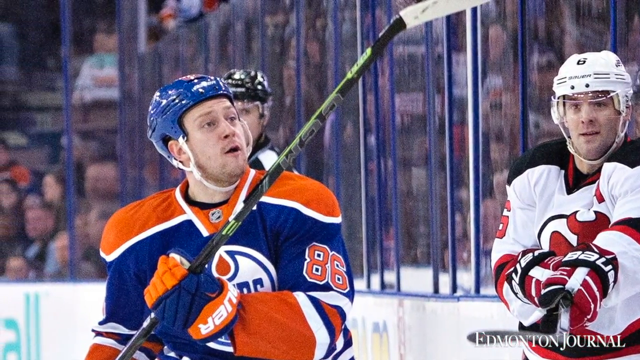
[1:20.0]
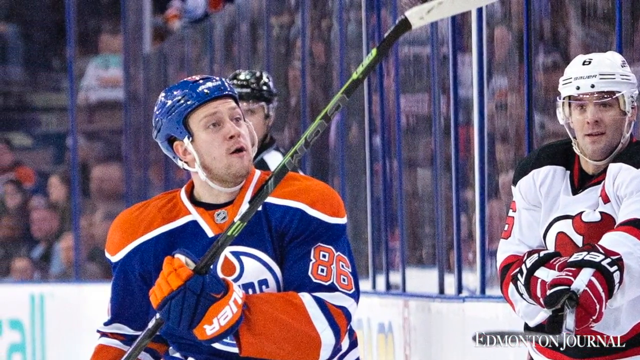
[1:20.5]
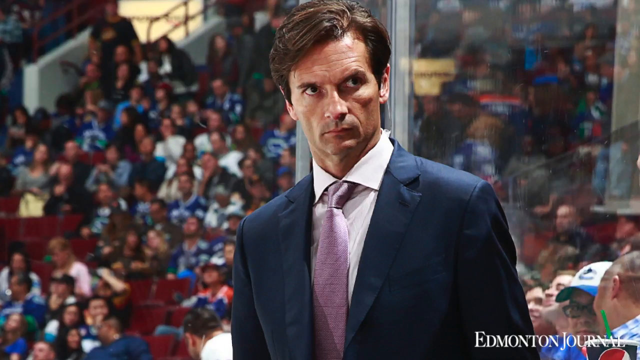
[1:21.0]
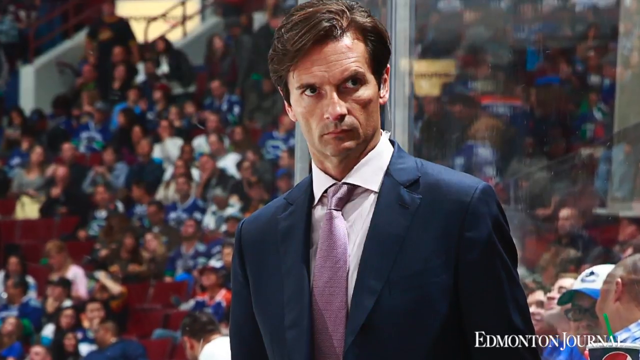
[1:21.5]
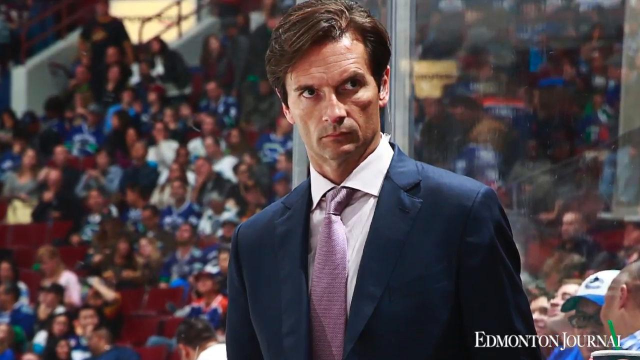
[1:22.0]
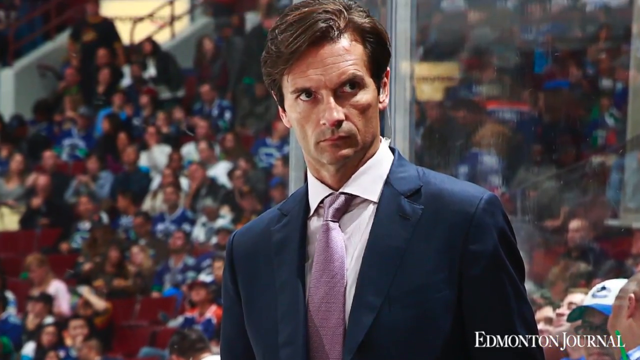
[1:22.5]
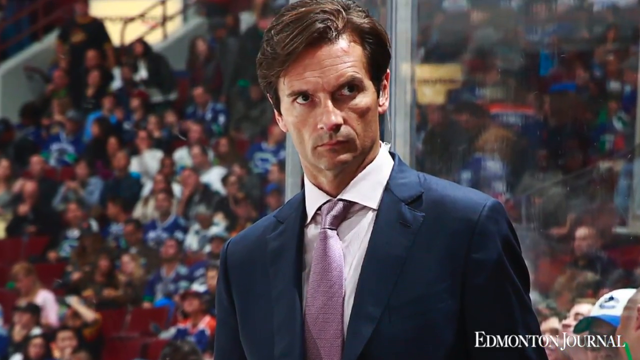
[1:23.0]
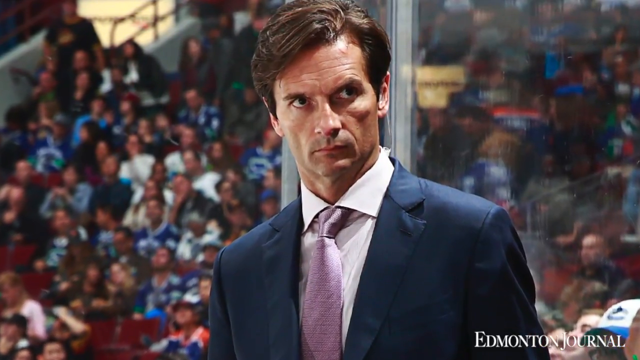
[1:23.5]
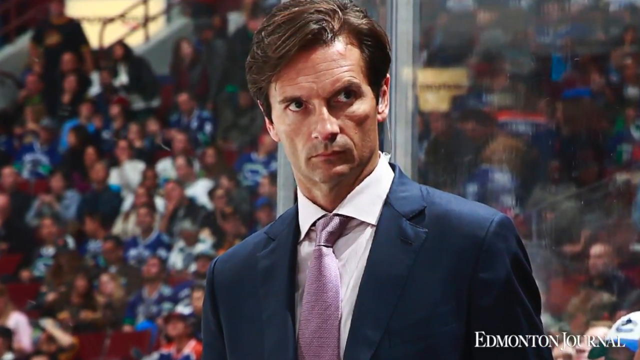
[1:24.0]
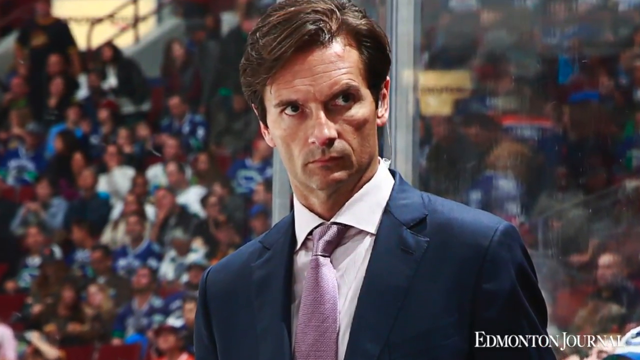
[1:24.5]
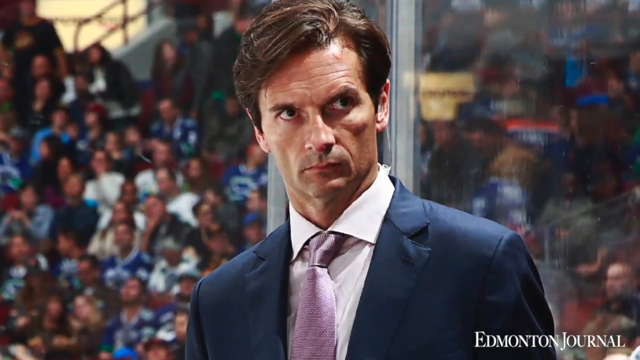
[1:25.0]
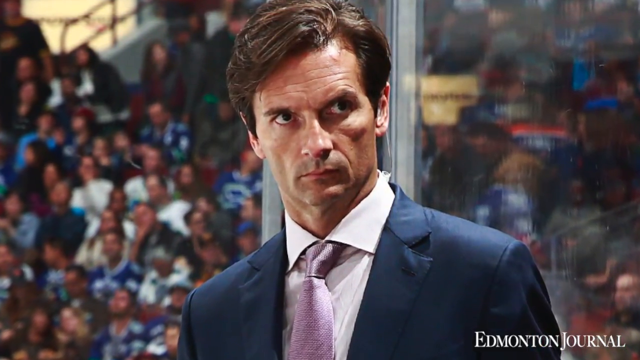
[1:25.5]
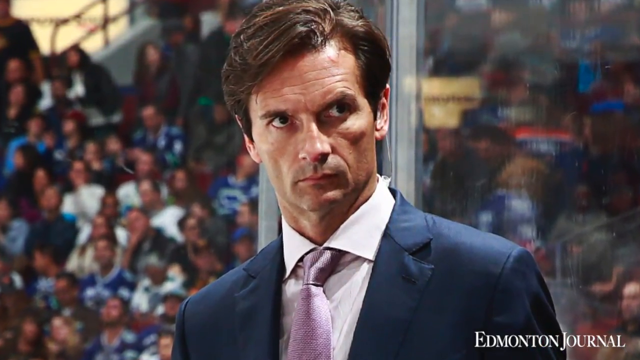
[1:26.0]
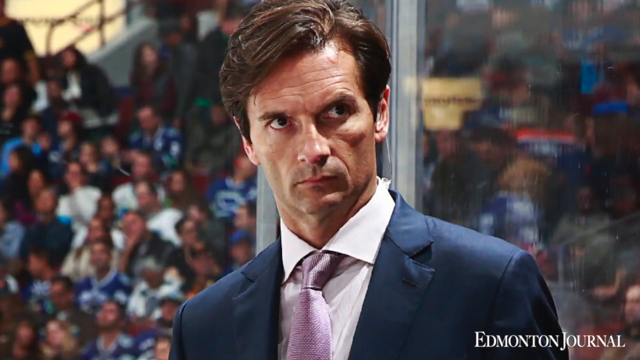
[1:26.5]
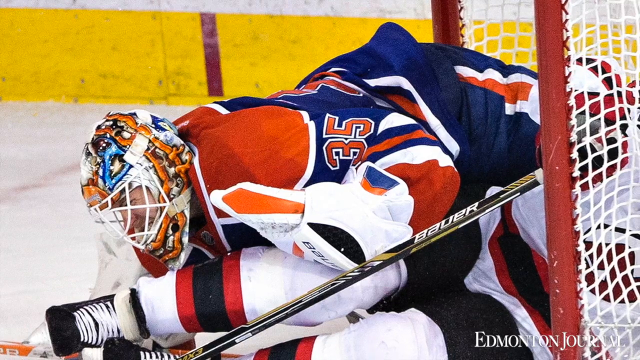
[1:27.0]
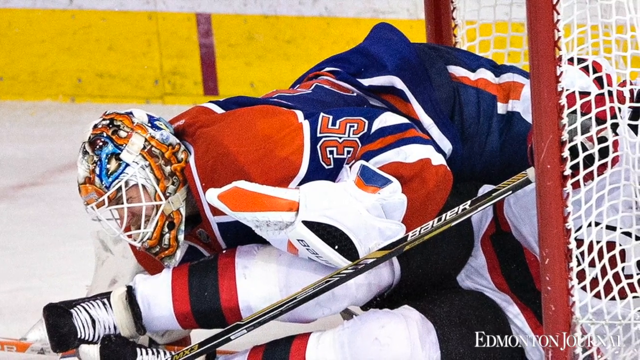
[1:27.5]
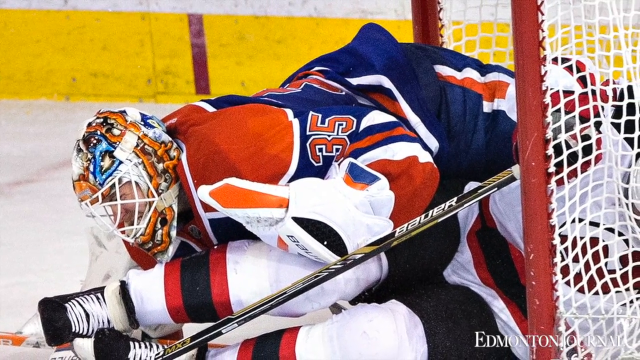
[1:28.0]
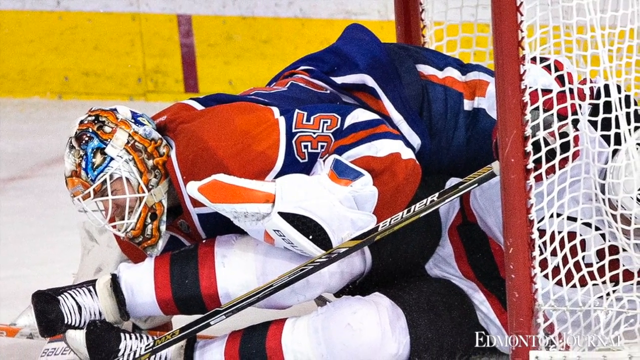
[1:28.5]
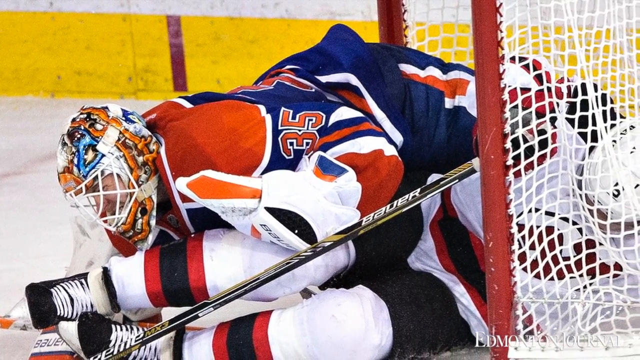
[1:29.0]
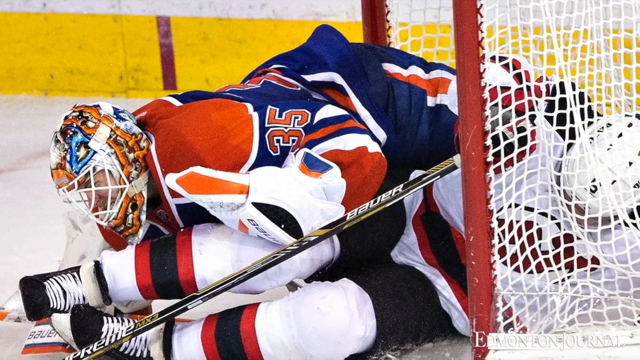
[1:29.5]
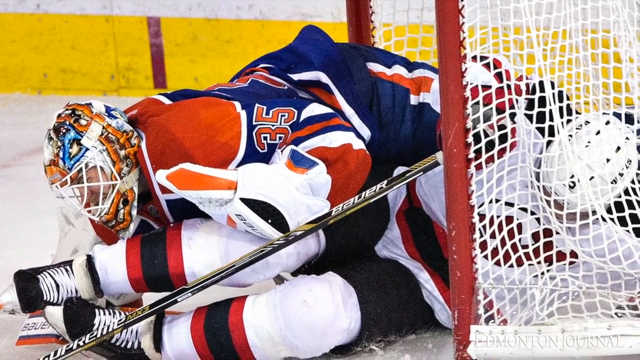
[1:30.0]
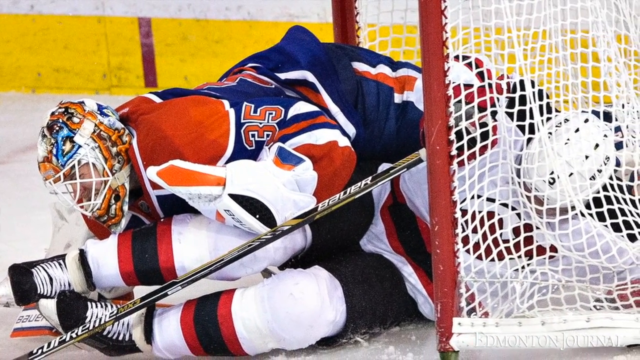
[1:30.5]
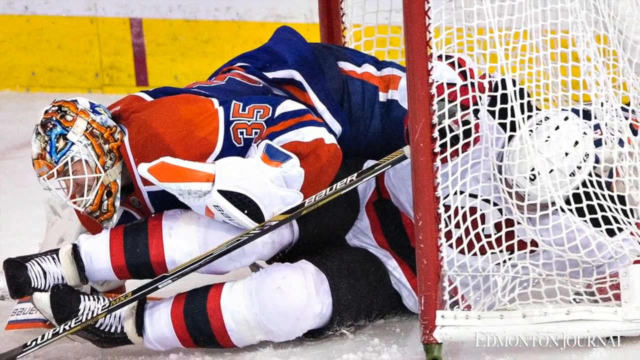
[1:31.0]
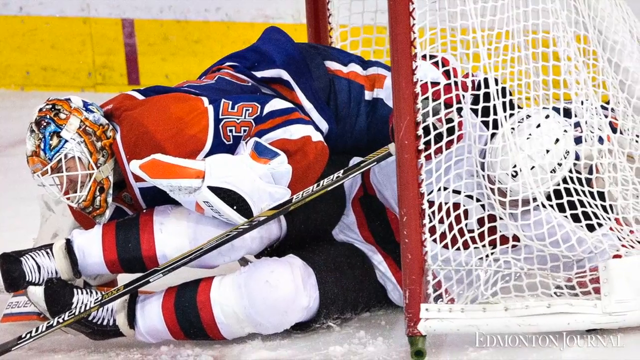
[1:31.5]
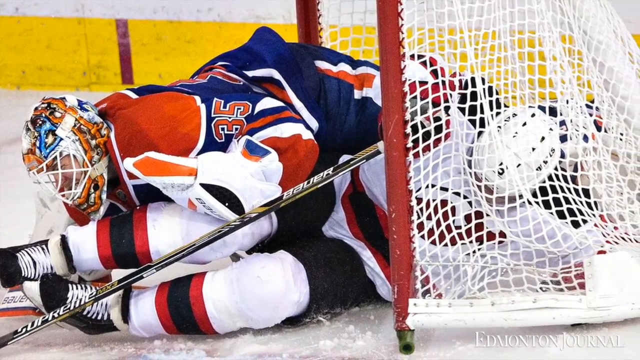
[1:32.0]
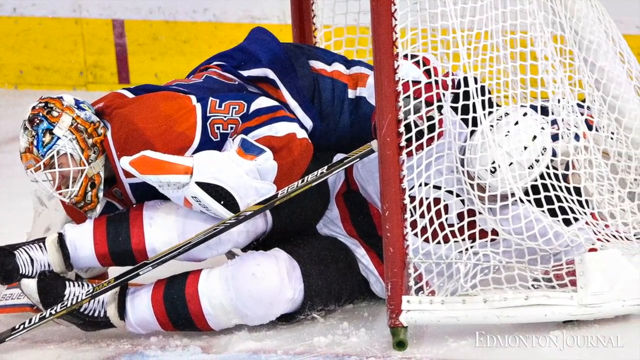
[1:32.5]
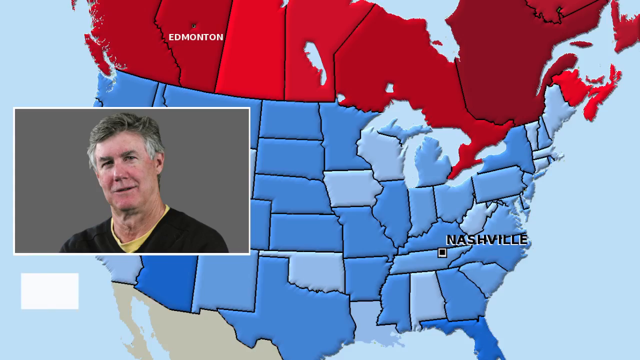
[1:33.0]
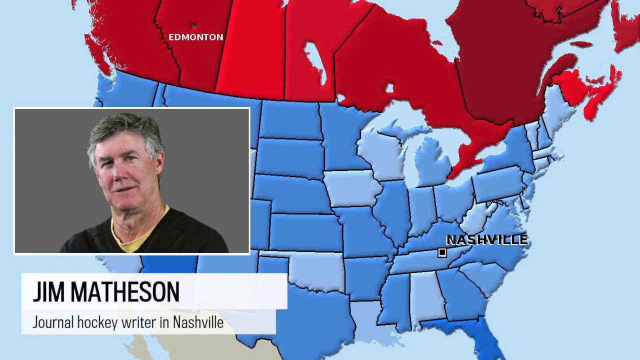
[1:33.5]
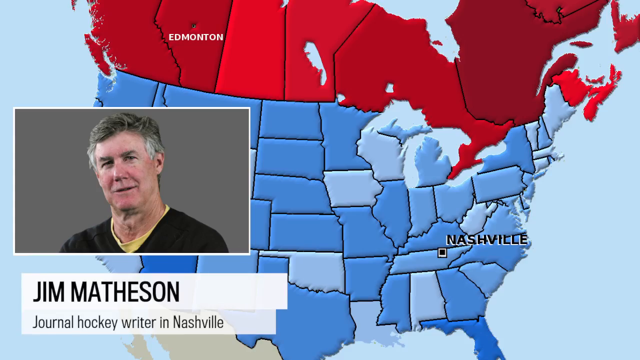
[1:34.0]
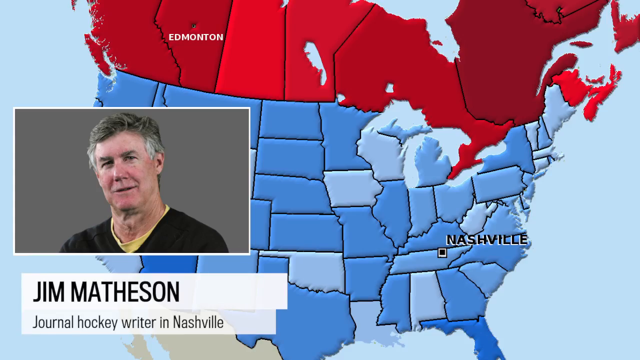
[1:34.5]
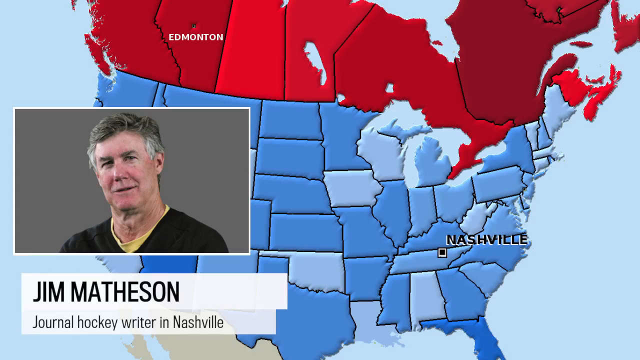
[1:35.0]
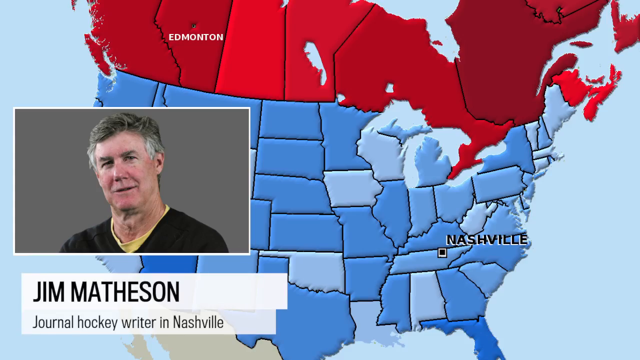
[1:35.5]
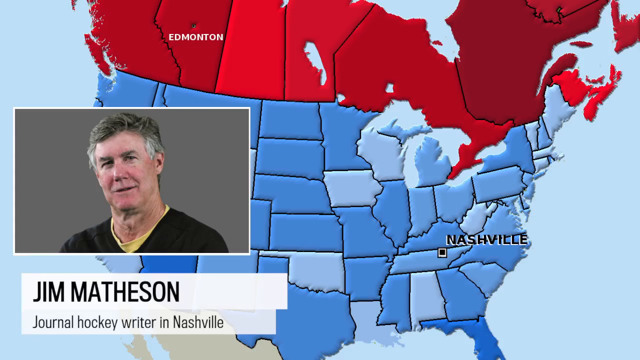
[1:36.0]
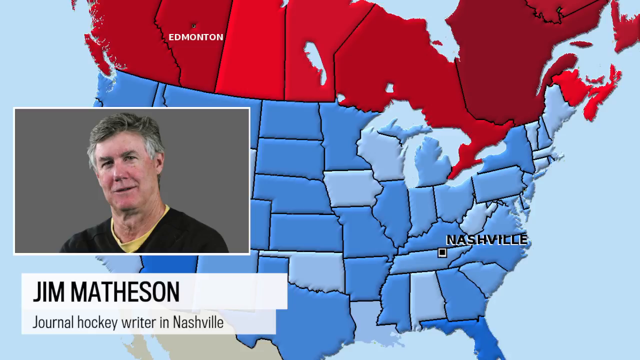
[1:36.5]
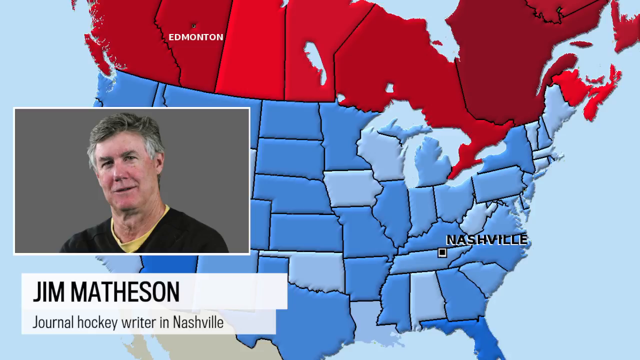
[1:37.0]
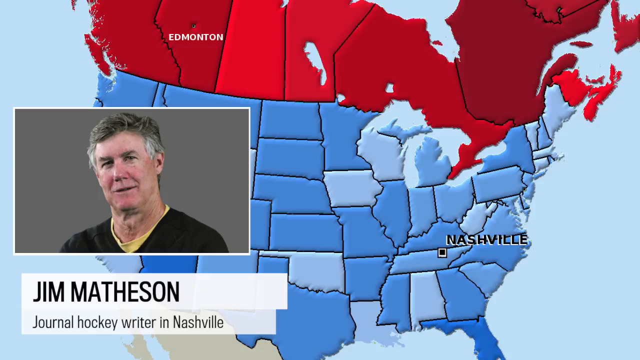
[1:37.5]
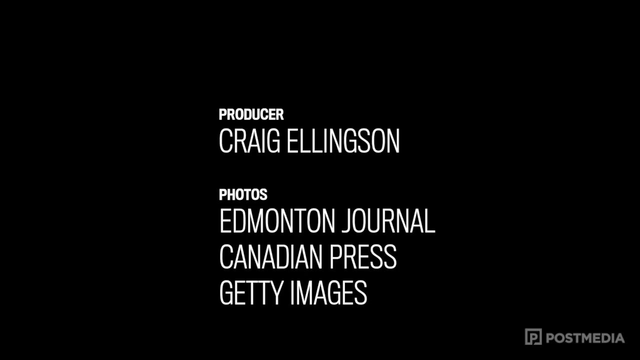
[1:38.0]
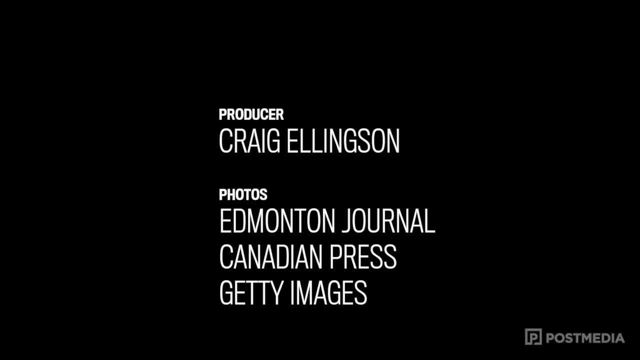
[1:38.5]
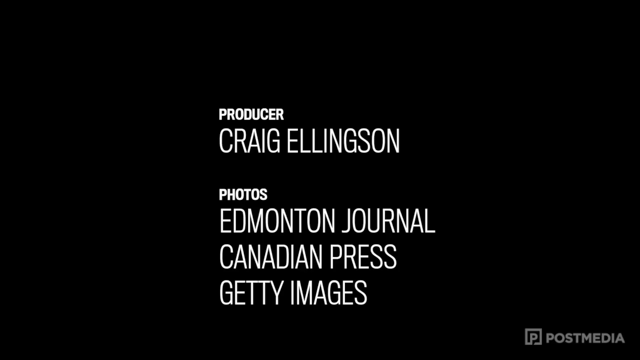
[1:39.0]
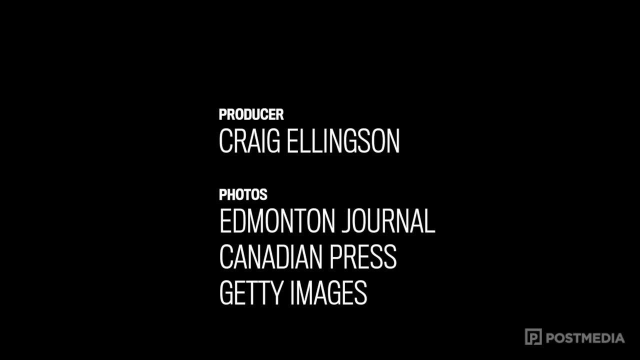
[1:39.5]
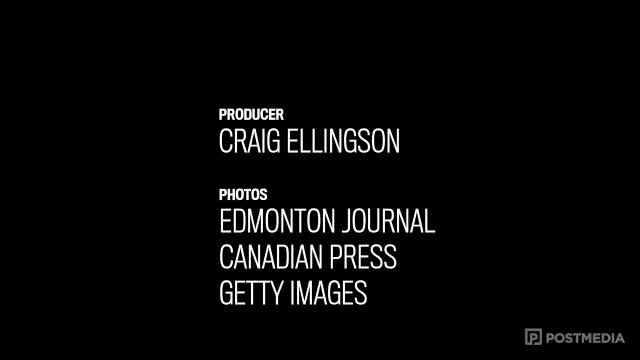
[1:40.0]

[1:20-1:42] The scene changes to a man in the middle dressed in a dark blue suit and a light purple tie. The view slowly zooms in on him. He has dark brown hair, looks to the upper right corner, and looks very mad and upset. The scene changes to another still image of two players. A New Jersey Devils player lies on the ice on the right side with his body halfway into the goal post, his head inside the net. The Oilers goalie looks like he is on top of him, with the goalie's head on the left side. It is a battle for the puck. The scene changes, and the picture of Jim Matheson again appears on the left with the map of the United States and Canada in the background, just as before. Then credits appear on a black background; in the middle the text says "producer Craig Ellingson, photos, Edmonton Journal, Canada Press, Getty Images".